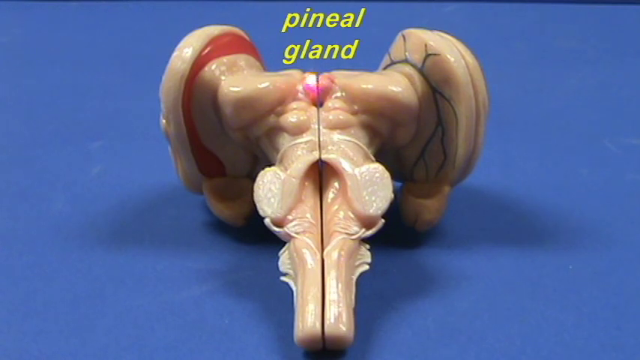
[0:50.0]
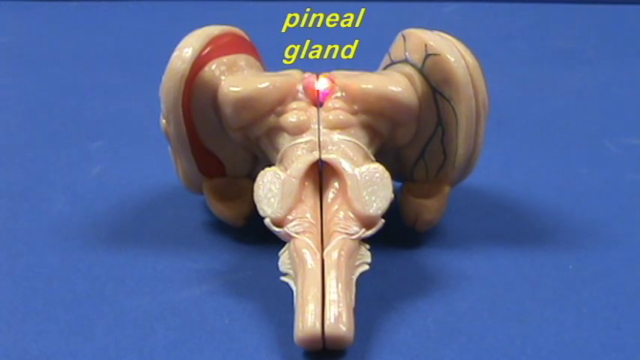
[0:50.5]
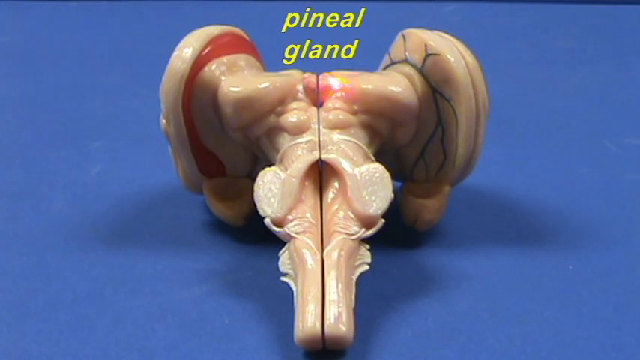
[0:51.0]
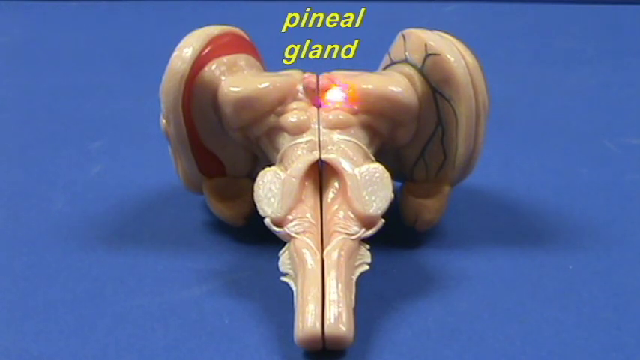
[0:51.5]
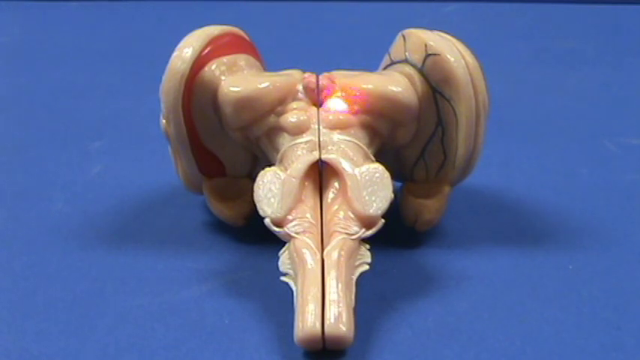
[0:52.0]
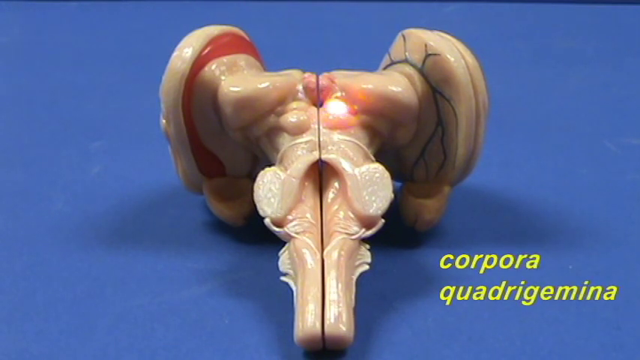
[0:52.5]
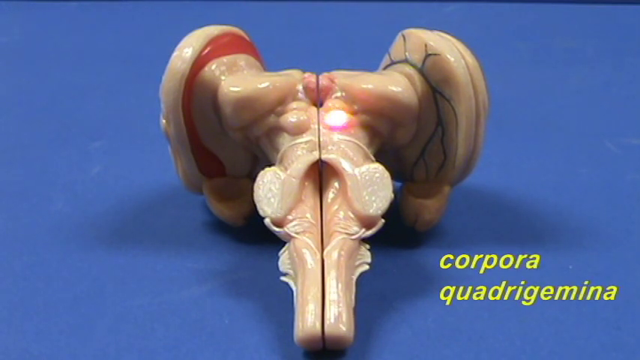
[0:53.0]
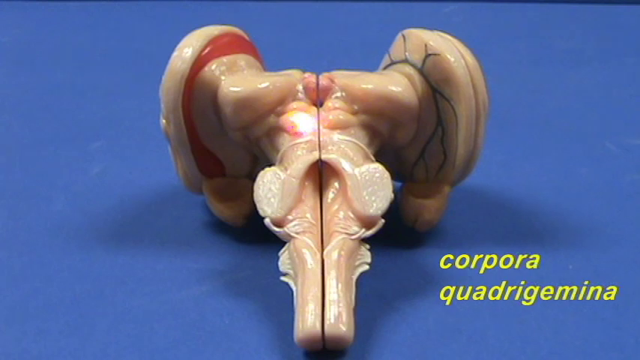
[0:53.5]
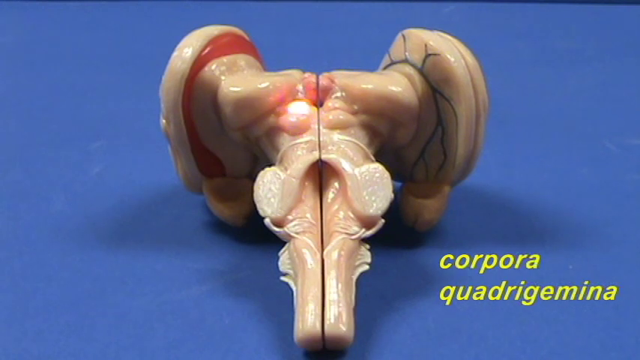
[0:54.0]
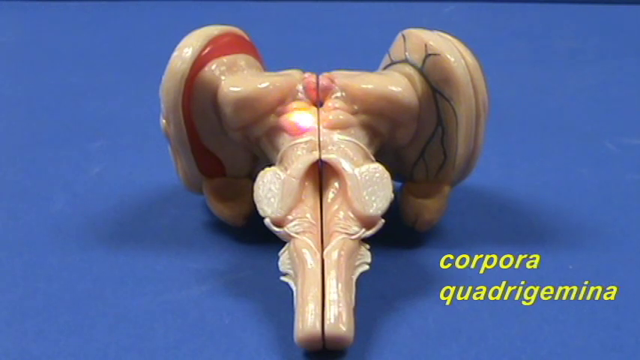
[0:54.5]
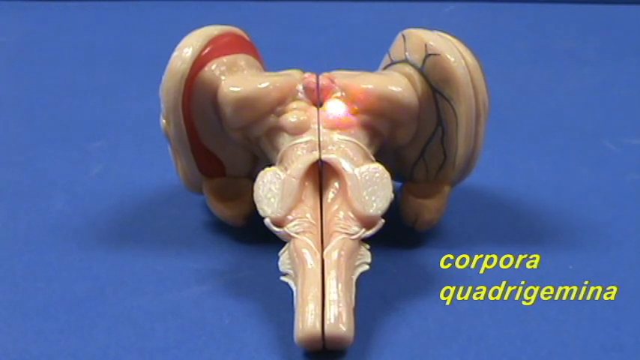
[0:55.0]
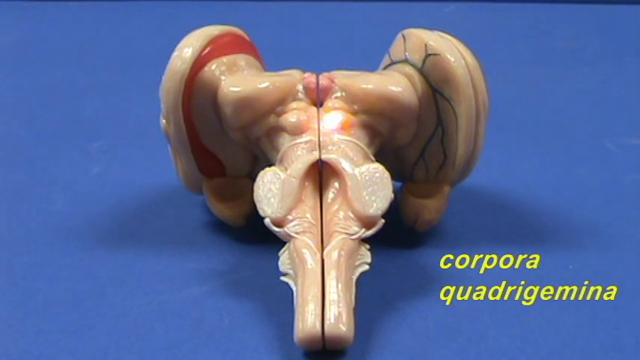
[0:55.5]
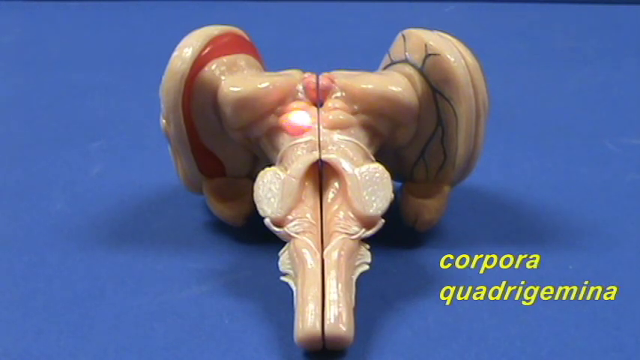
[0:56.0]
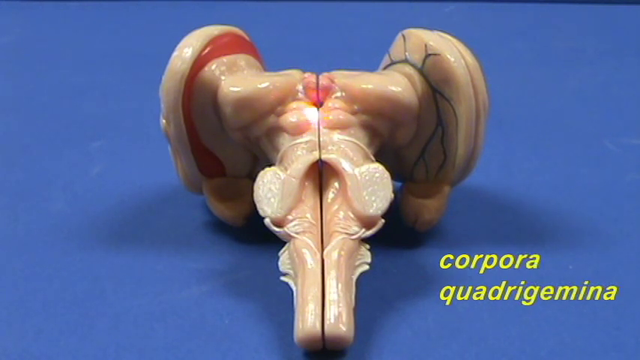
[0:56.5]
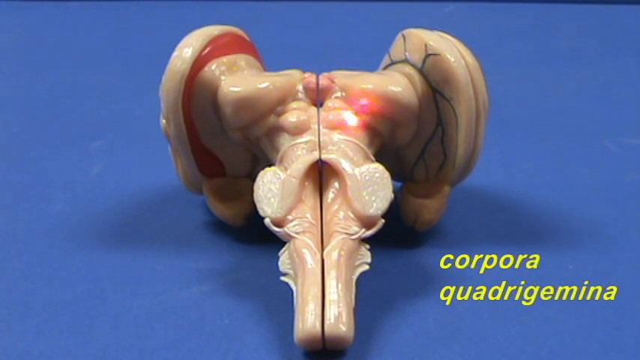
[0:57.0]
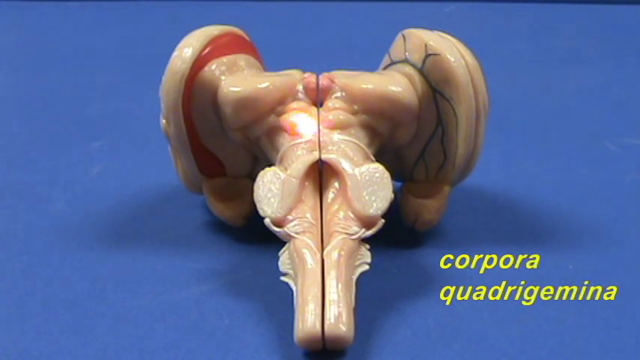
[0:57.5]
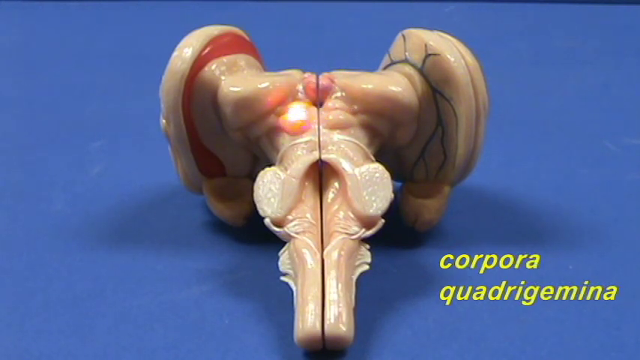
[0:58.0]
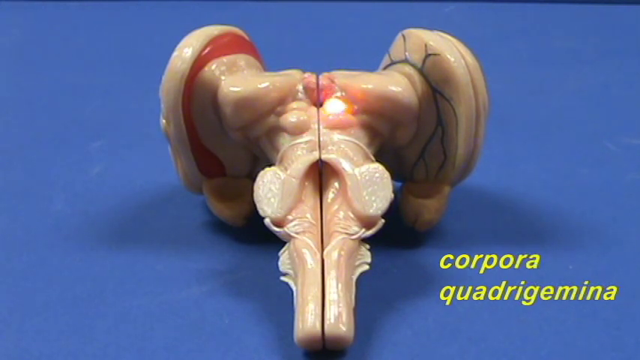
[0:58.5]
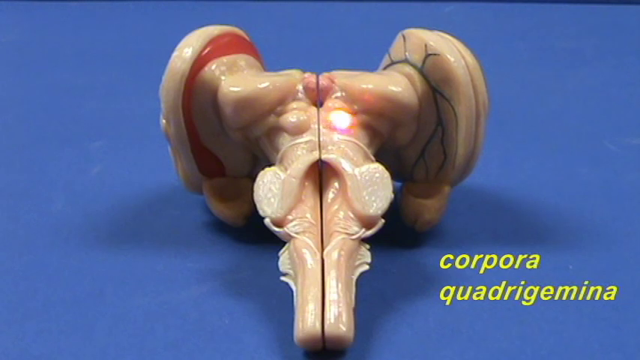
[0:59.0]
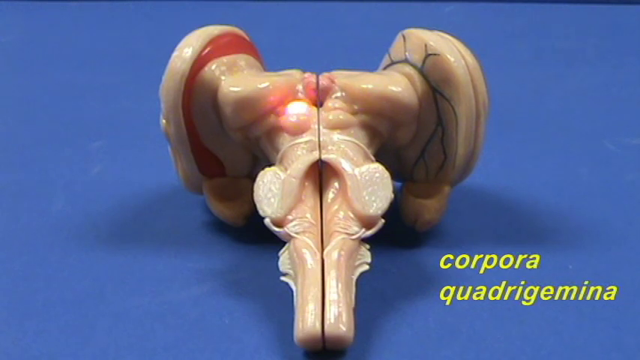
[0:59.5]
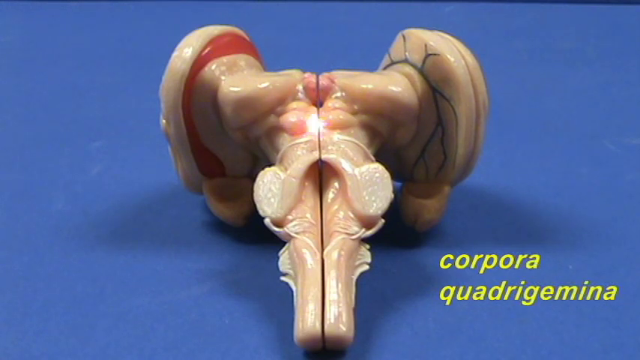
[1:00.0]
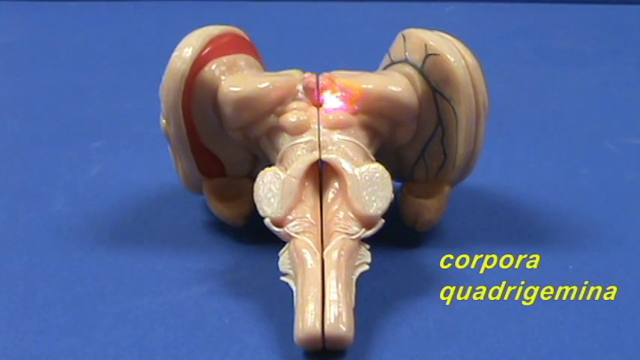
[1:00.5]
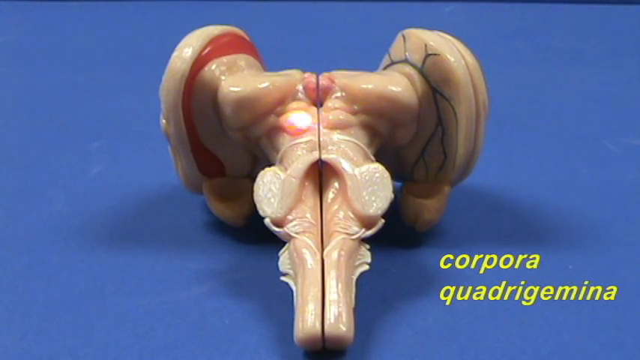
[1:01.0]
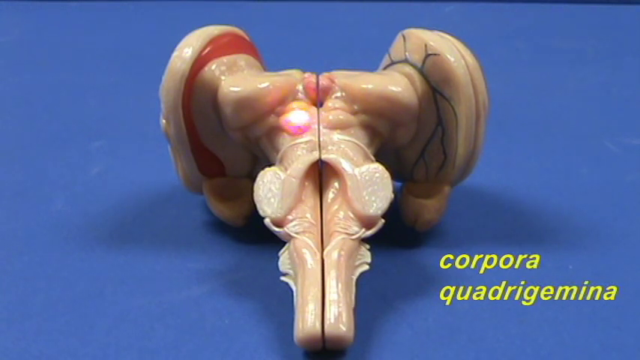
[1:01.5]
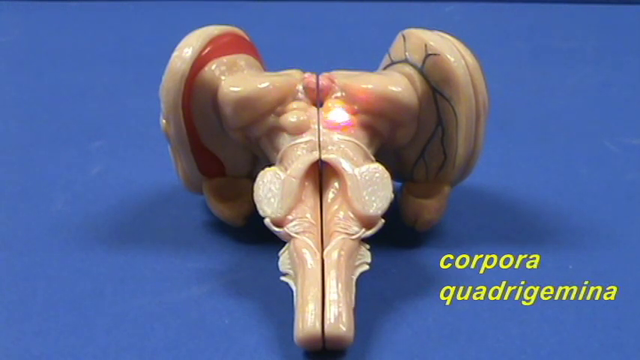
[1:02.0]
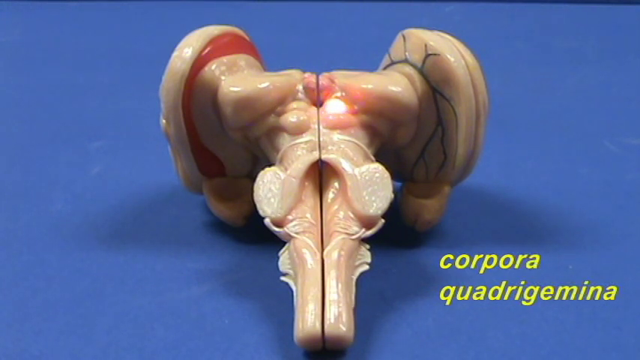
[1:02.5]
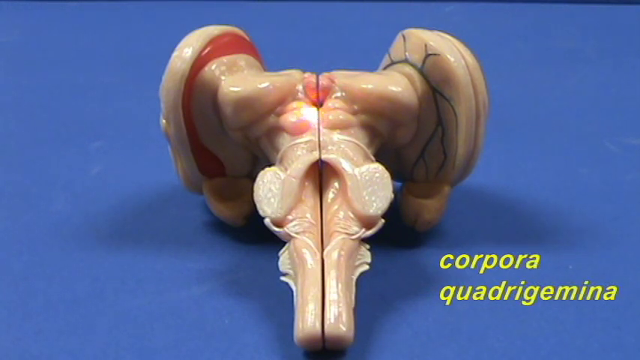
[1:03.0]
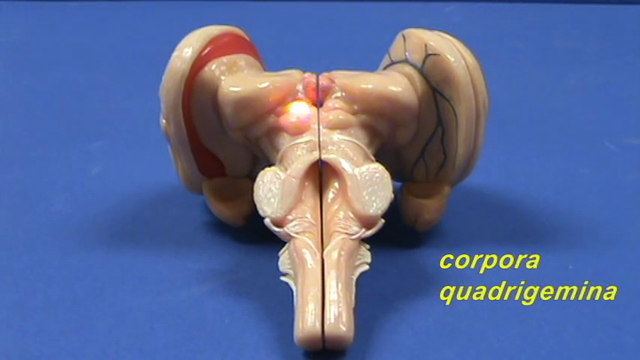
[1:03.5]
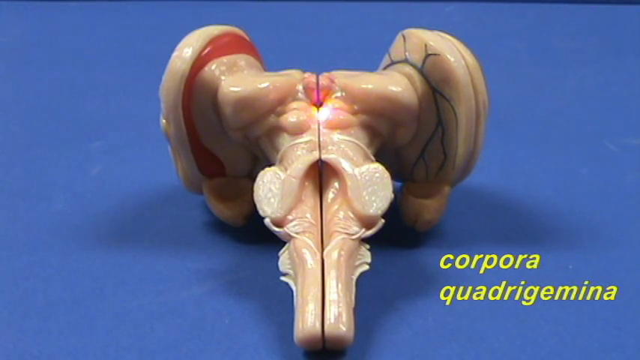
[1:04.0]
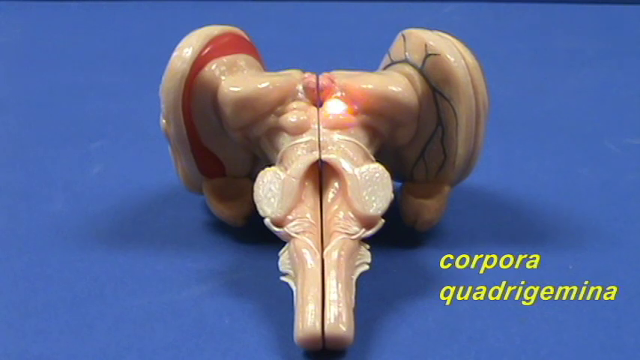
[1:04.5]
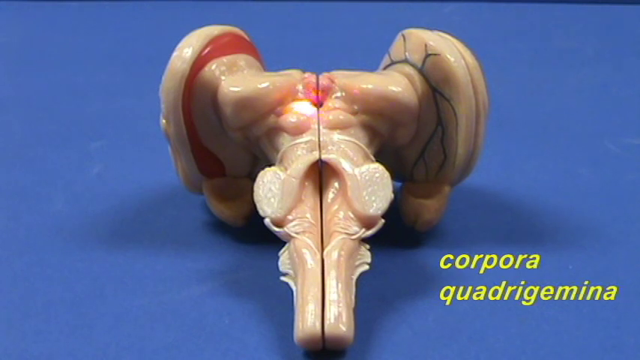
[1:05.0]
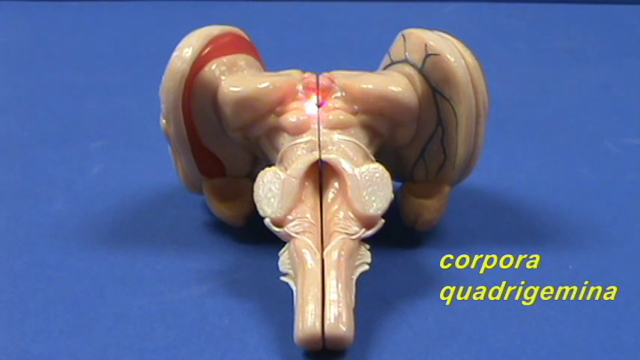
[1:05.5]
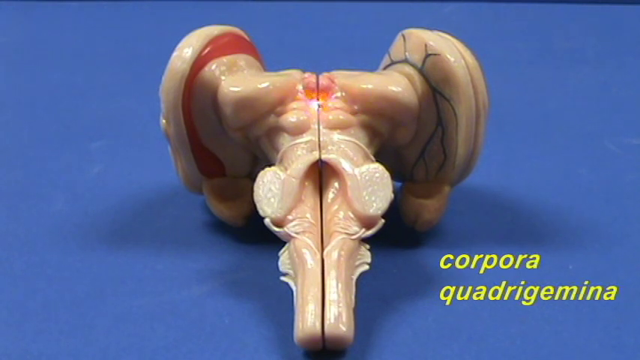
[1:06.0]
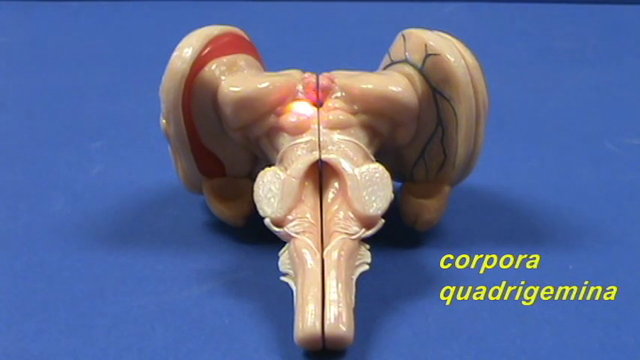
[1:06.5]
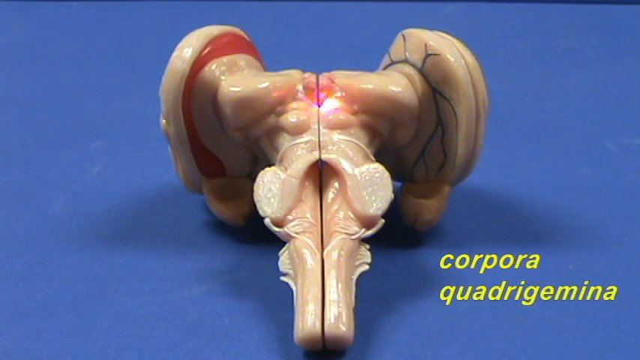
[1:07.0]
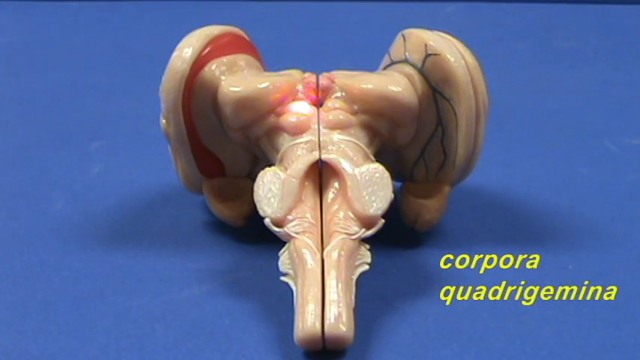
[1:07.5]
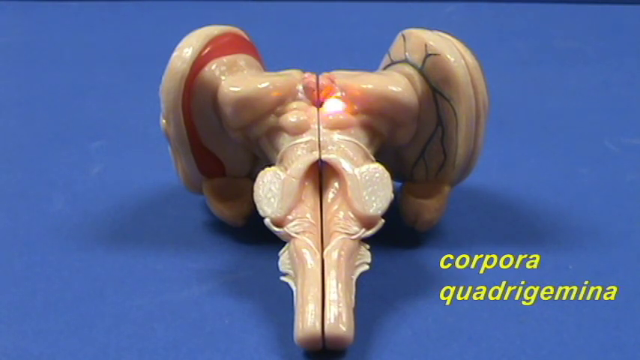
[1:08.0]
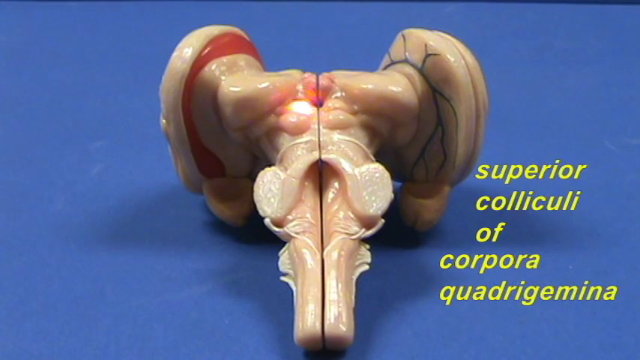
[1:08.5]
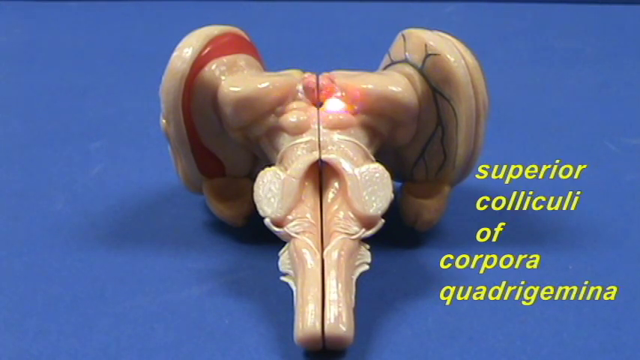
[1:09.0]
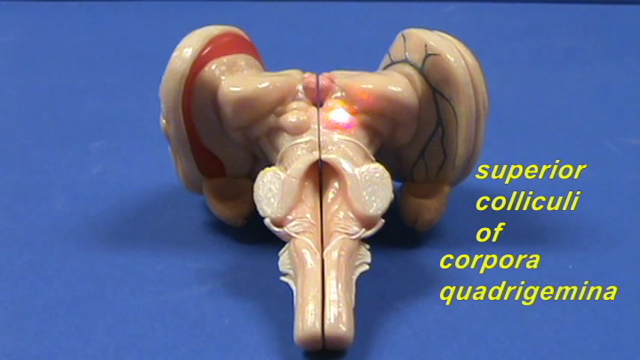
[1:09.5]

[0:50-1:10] The laser moves from the pineal gland to the area directly beneath it, where there are two little lumps, one on either side of the model. Words appear again at the bottom right of the screen reading "corpora quadrigemina." The laser circles one lump and then the other, then circles both together, and the words change to "superior coliculi of corpora quadrigemina." The model appears to have a dividing line down the center of the vertical part of the T, where the laser is now heading. The line is closed, but there appear to be matching structures on either side all the way down, and the cursor points them out while the name of each part appears on the screen in yellow text.